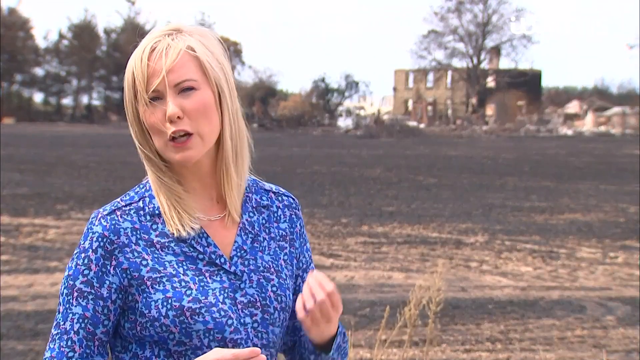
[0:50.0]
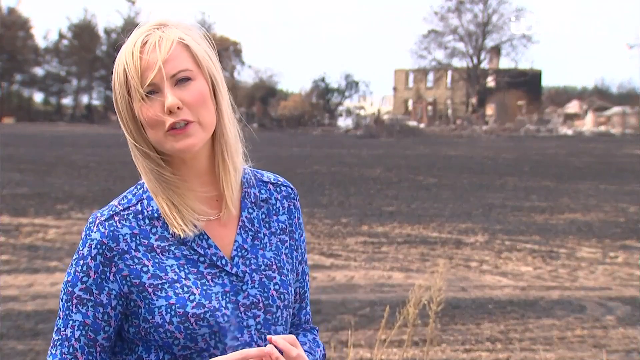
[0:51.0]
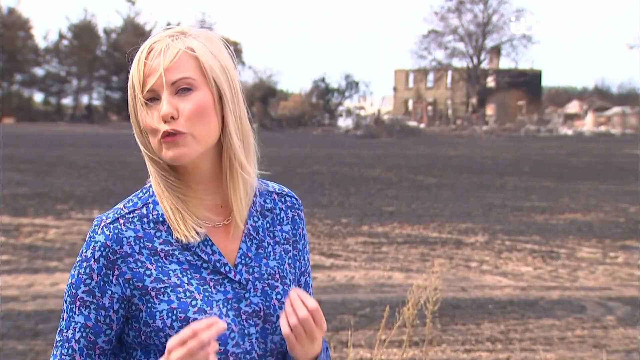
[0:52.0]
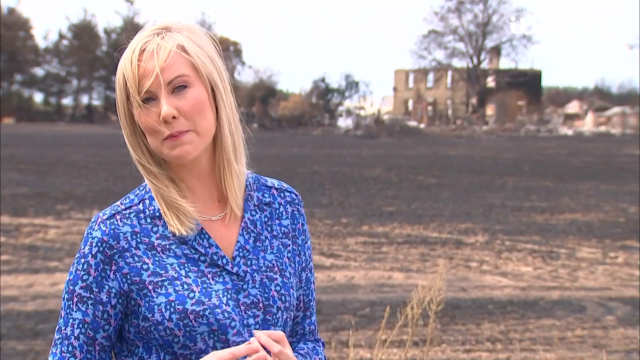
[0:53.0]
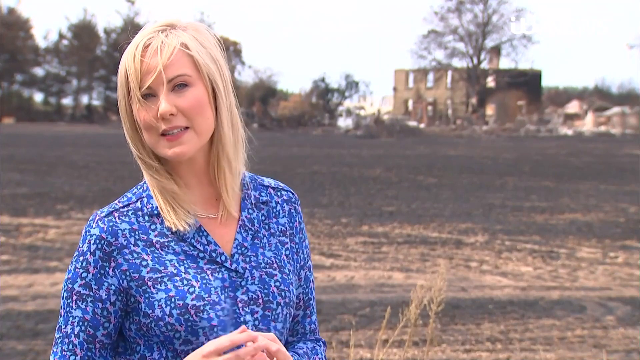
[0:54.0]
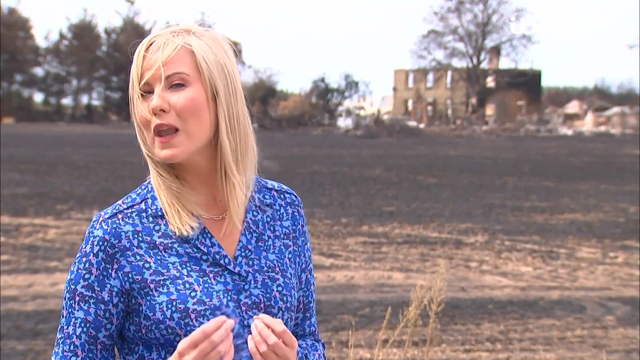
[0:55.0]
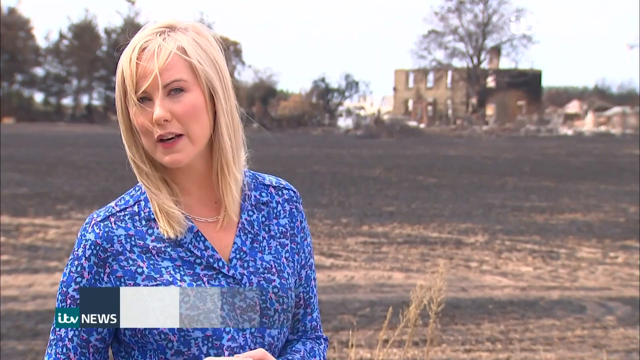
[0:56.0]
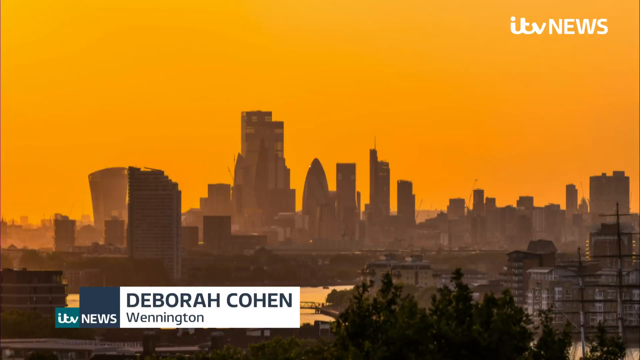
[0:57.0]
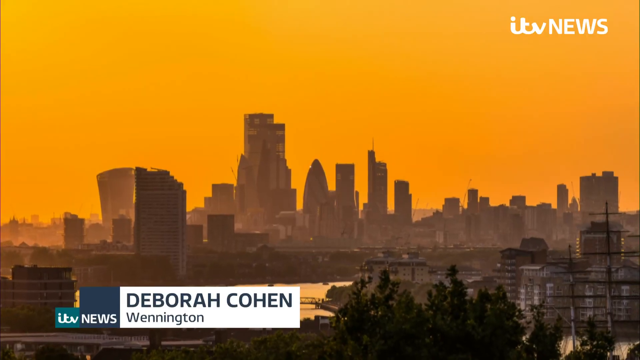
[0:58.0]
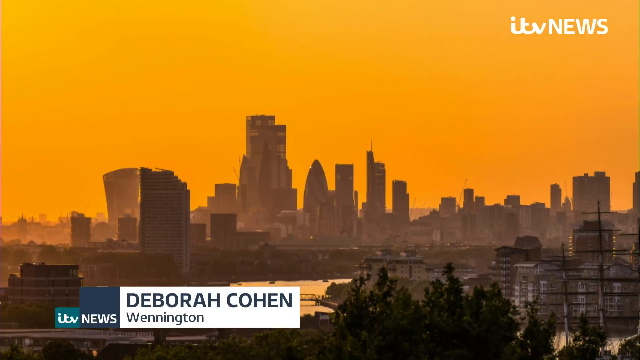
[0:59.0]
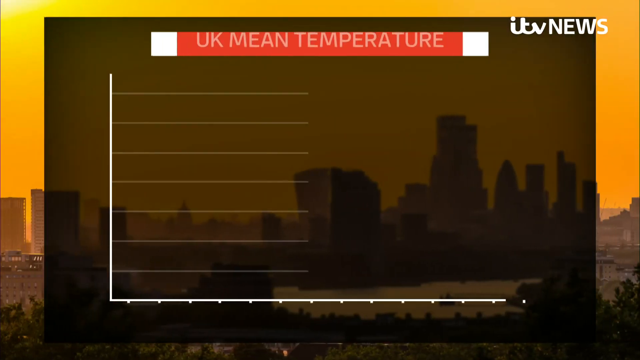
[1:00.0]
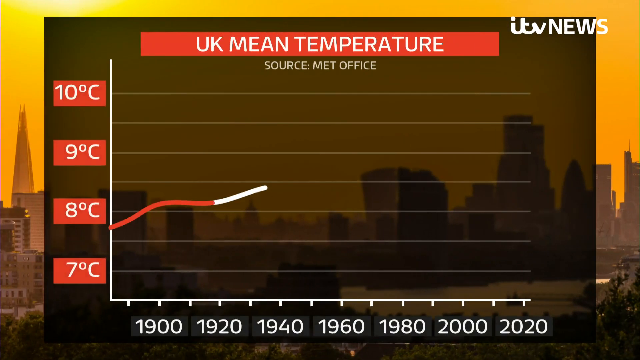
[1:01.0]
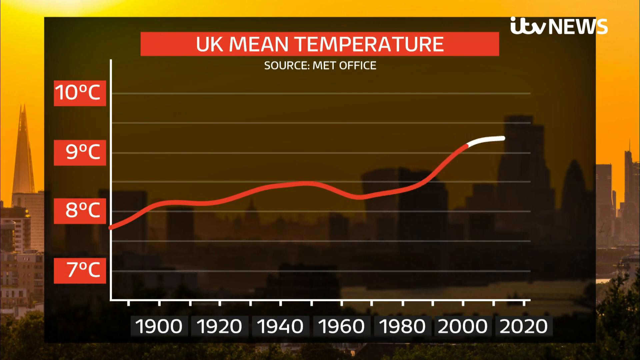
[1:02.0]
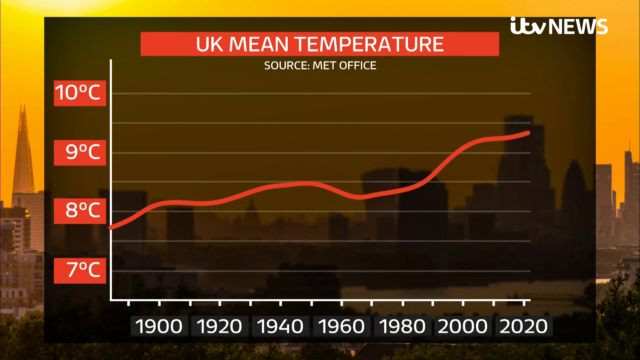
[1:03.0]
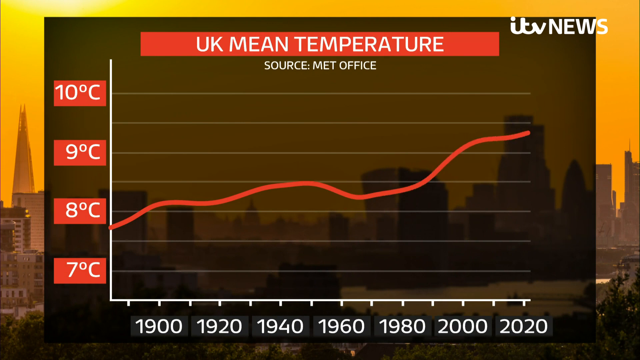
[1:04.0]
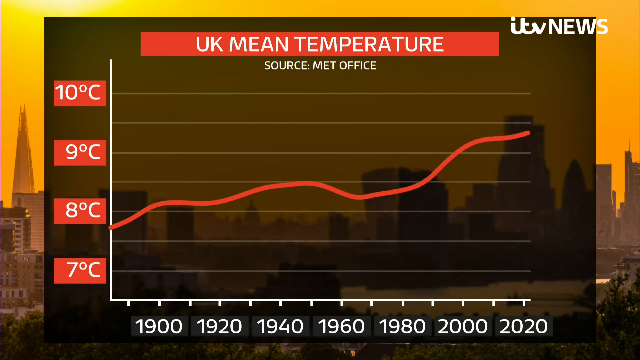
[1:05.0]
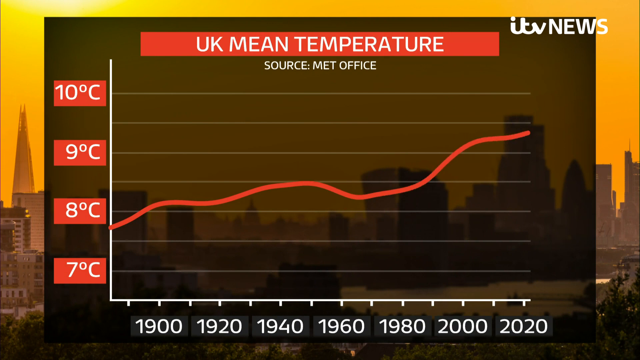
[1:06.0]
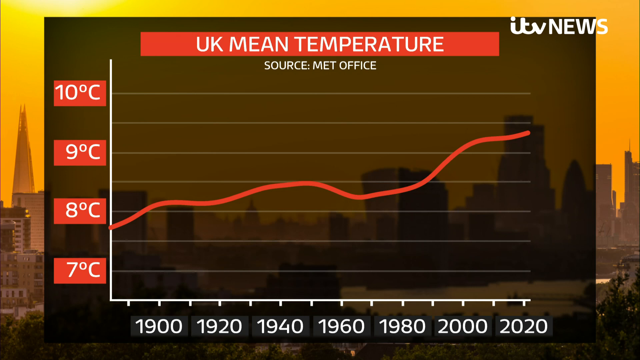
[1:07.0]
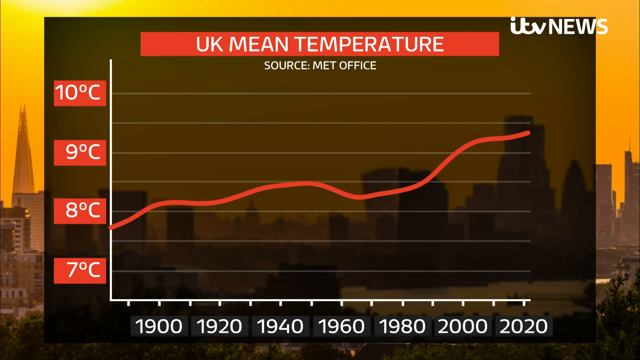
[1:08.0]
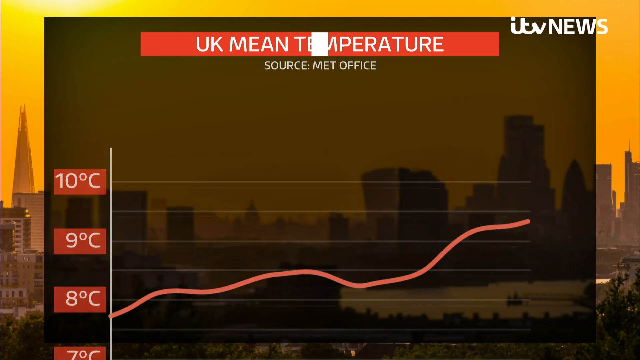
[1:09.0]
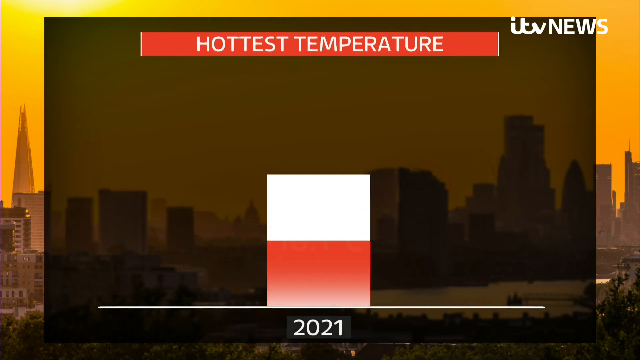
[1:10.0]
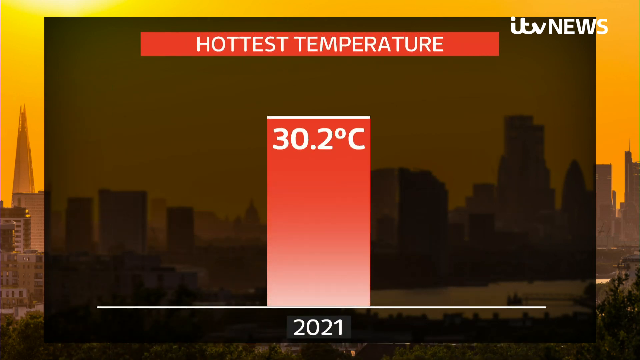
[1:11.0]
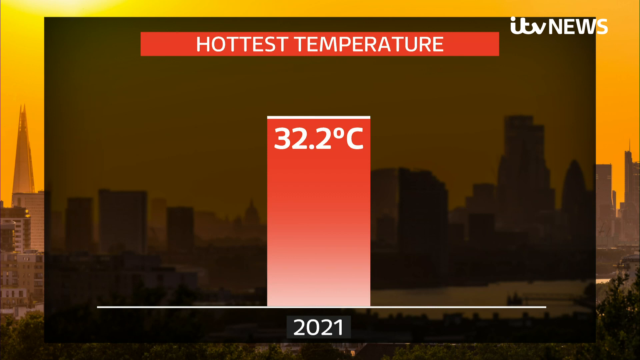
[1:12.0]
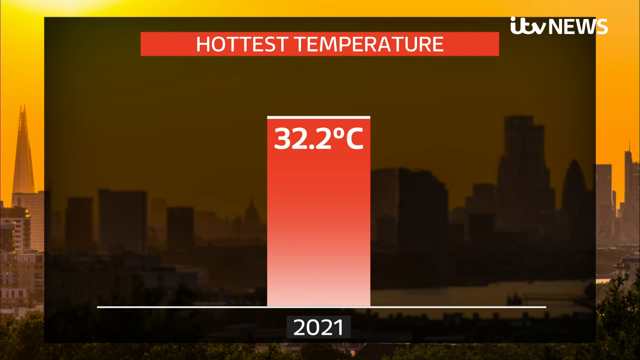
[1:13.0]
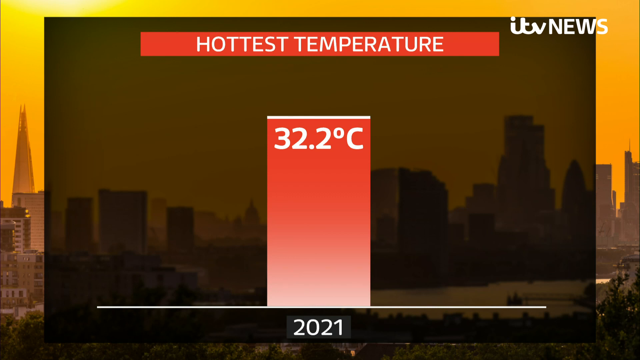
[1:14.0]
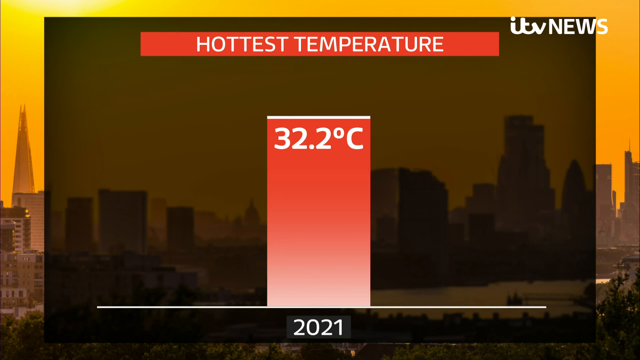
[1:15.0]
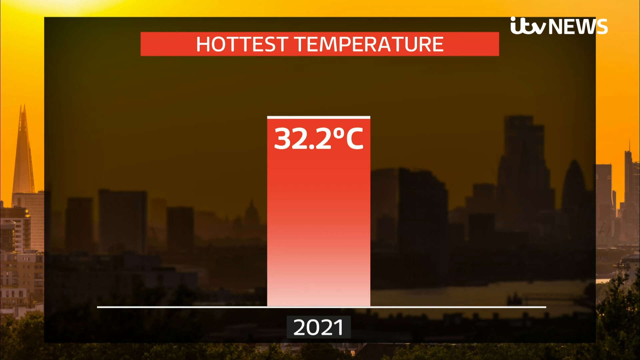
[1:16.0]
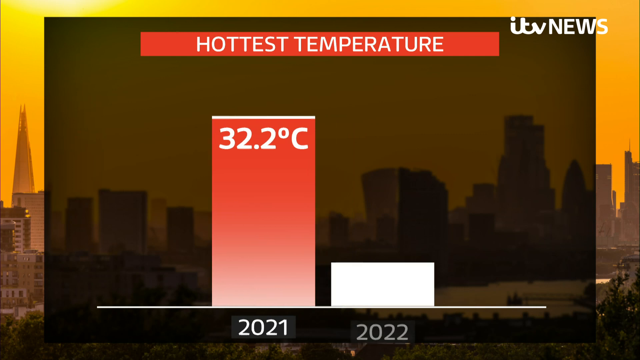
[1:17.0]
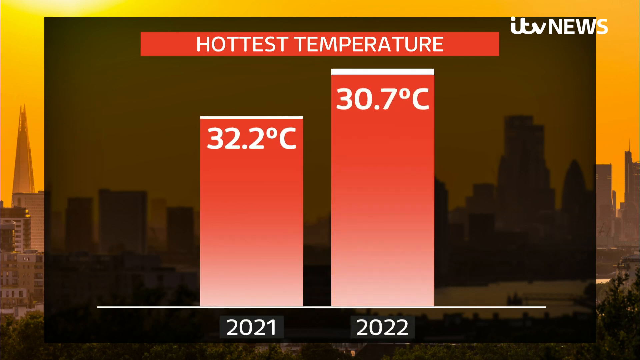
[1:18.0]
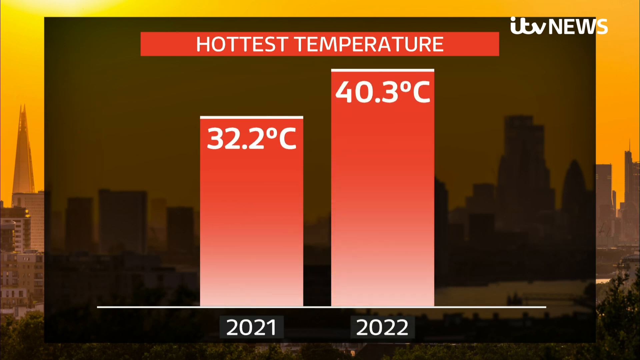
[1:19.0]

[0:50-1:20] A woman with blonde shoulder-length hair speaks to the camera. She wears a dark blue and light blue design shirt and a small gold necklace. Behind her is an open field, with a row of trees beyond it. On the right is an old stone or brick building that is just a shell without a roof, windows or doors, with one tall tree in front of it. Her name, Deborah Cohen, is shown at the bottom of the screen. The screen then changes to a cityscape under an orange sky, with the "itv News" logo in the upper right-hand corner; the outlines of the city buildings are all different sizes and shapes. A graph follows, titled "UK mean temperature", with a red line starting at 8 degrees centigrade and rising to almost 9 degrees centigrade. Next, a screen reads "hottest temperature, 32.2 degrees centigrade", and a block then appears next to it reading "40.3 degrees centigrade".